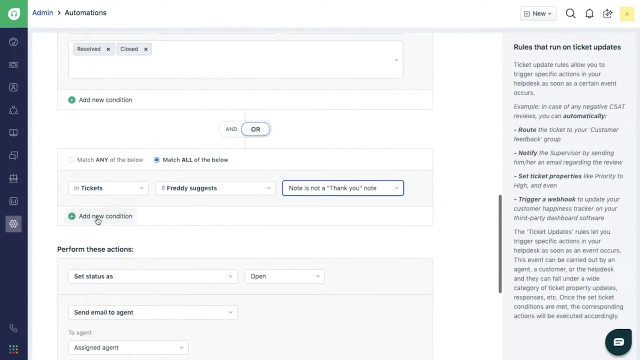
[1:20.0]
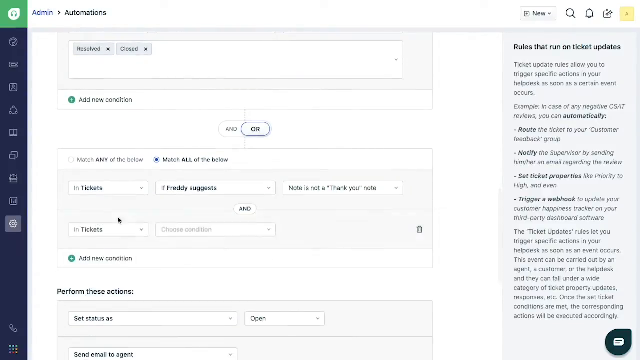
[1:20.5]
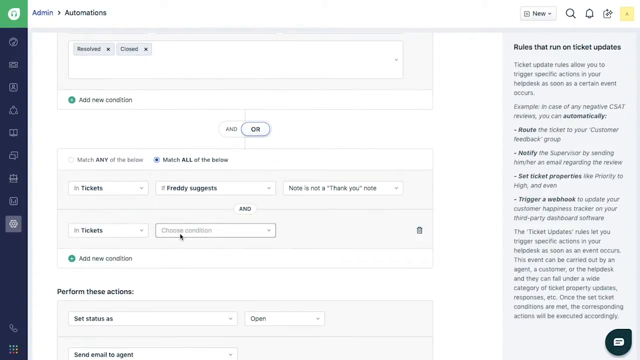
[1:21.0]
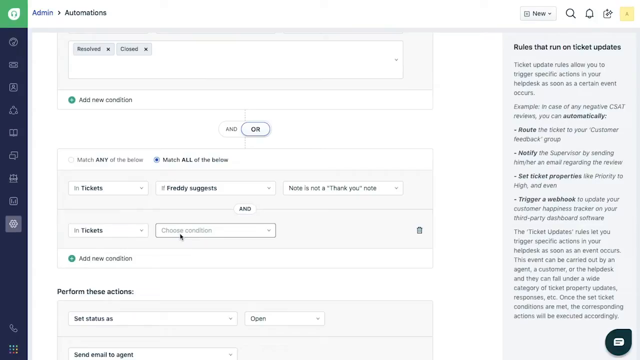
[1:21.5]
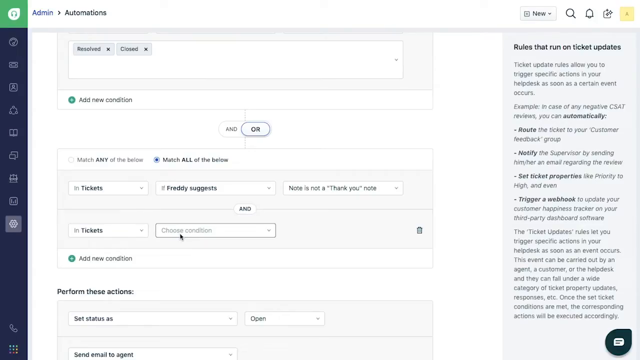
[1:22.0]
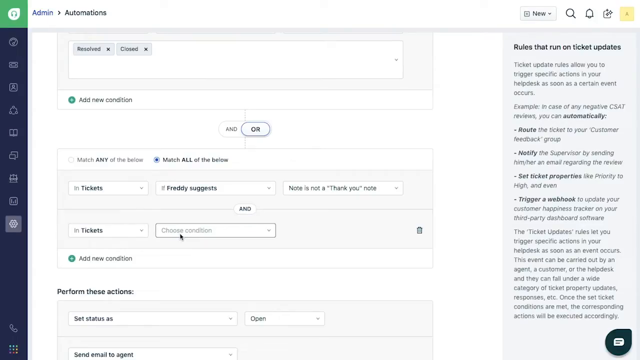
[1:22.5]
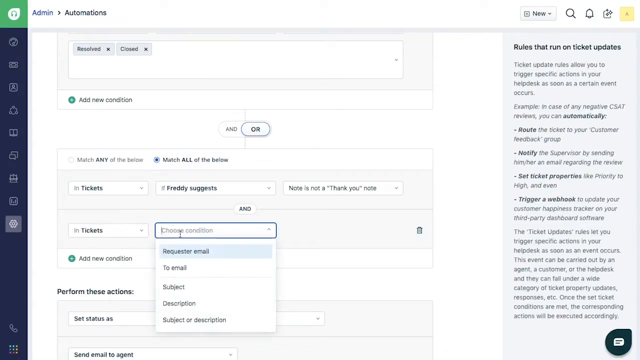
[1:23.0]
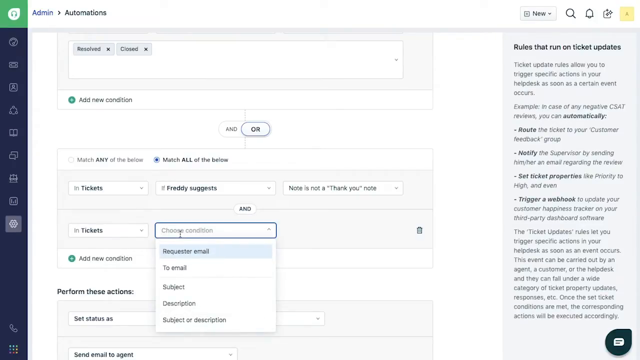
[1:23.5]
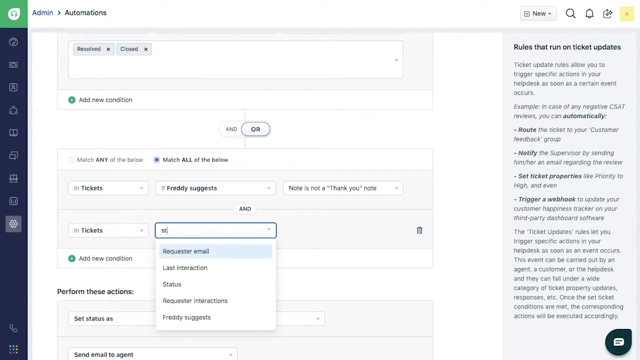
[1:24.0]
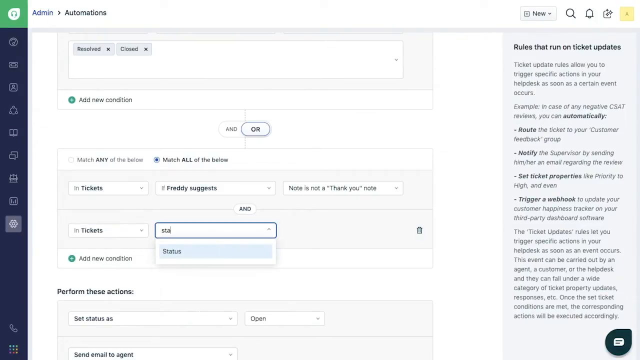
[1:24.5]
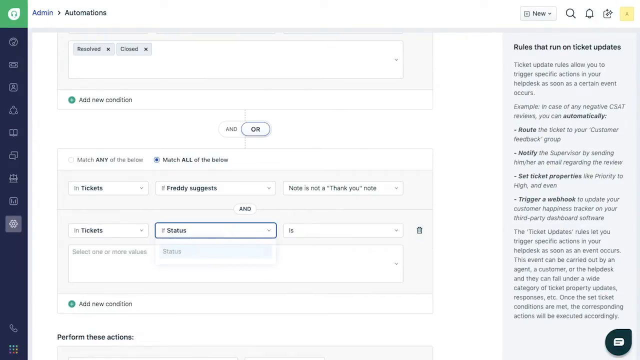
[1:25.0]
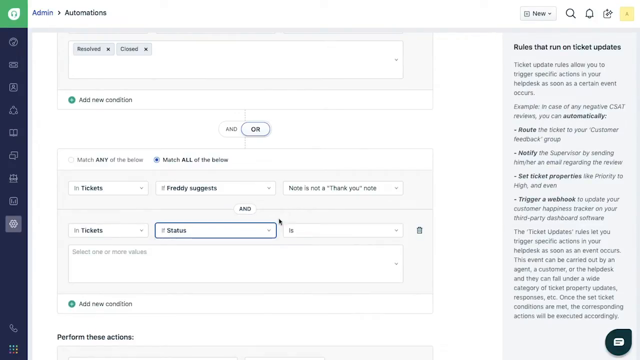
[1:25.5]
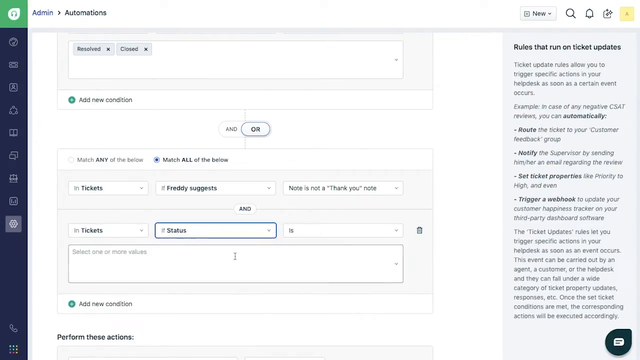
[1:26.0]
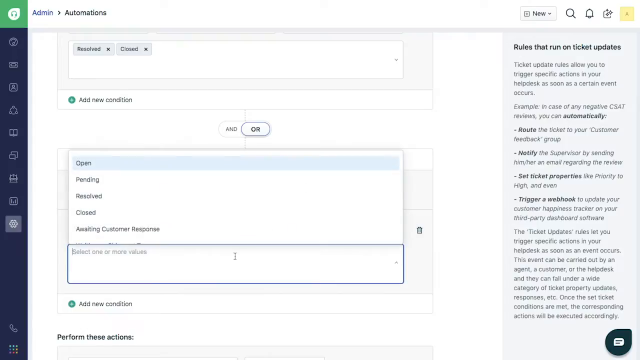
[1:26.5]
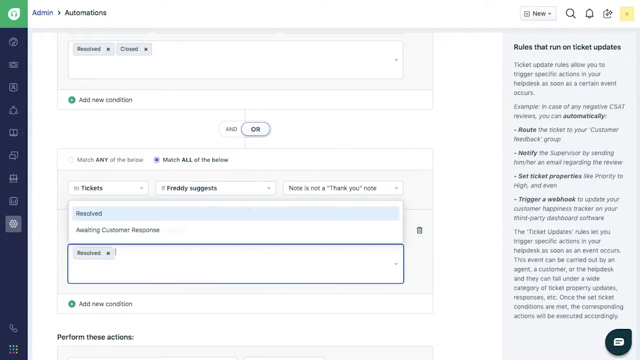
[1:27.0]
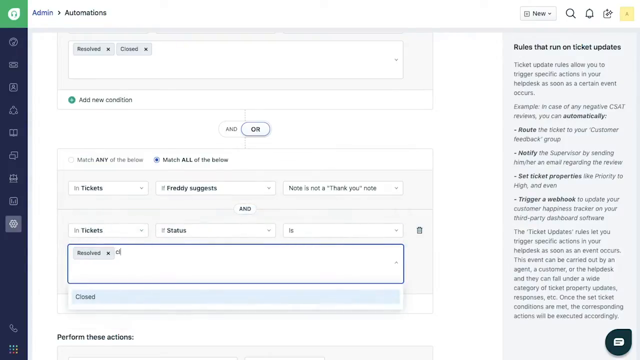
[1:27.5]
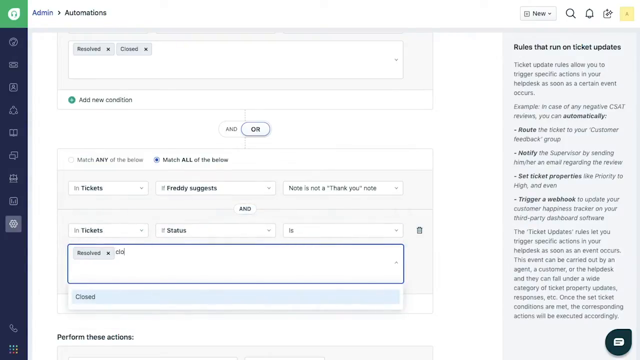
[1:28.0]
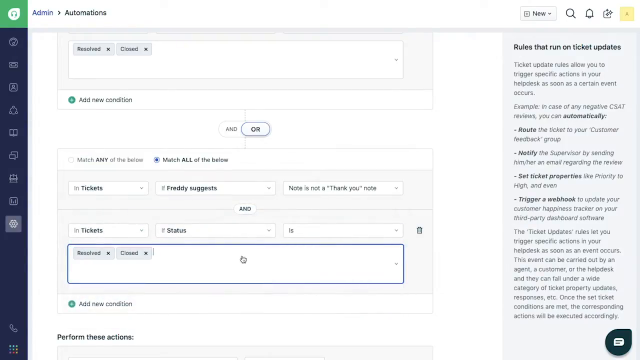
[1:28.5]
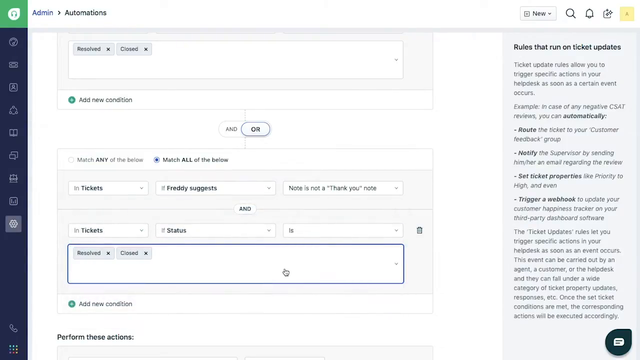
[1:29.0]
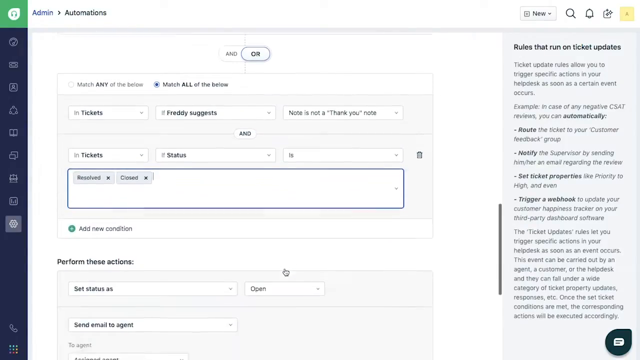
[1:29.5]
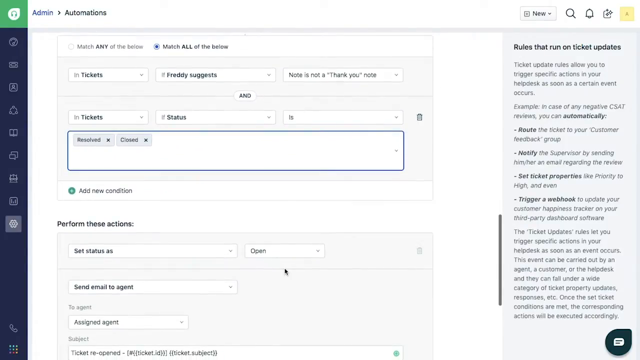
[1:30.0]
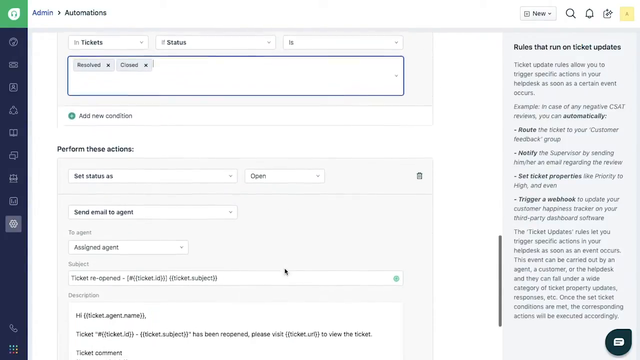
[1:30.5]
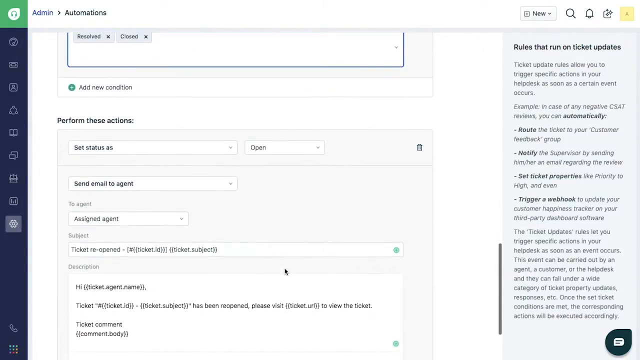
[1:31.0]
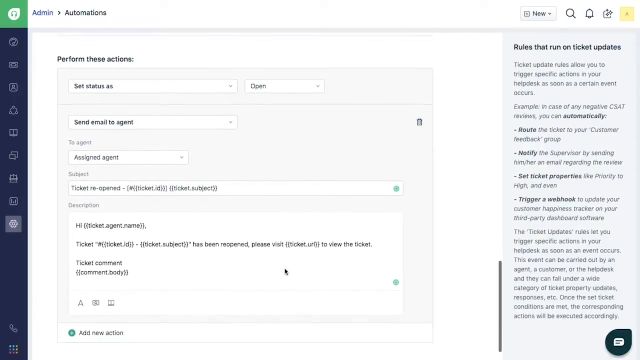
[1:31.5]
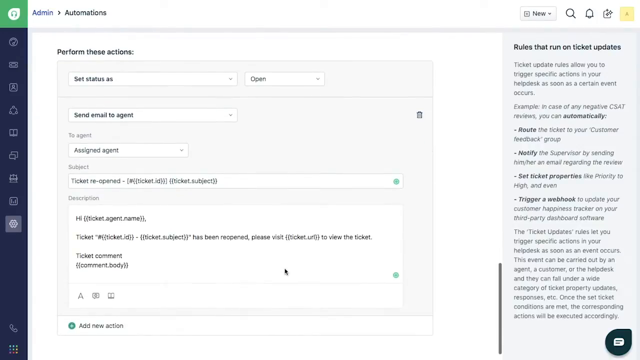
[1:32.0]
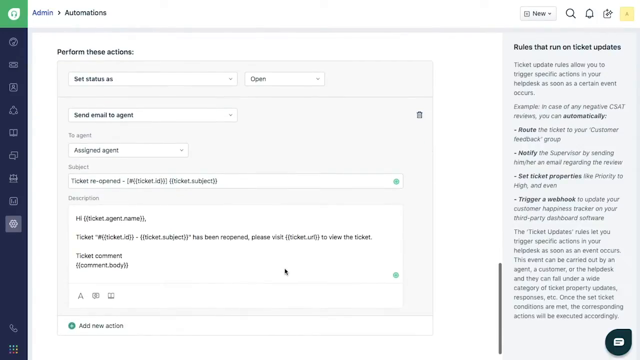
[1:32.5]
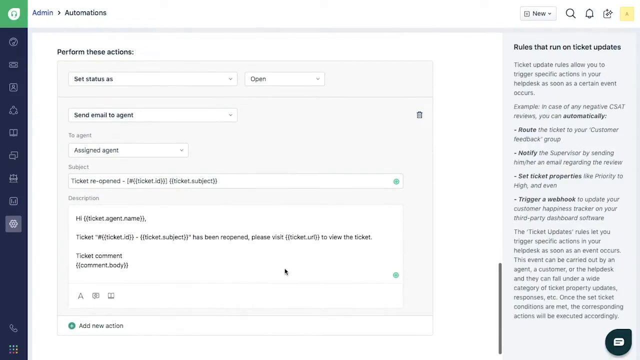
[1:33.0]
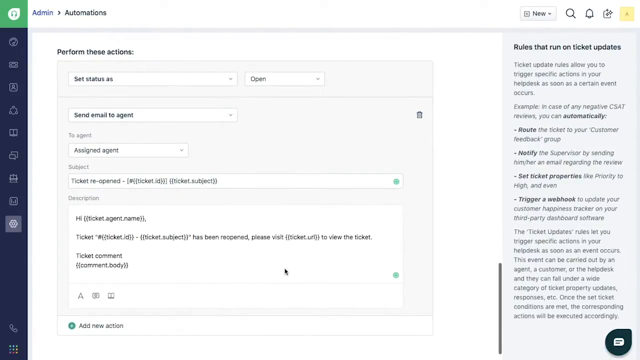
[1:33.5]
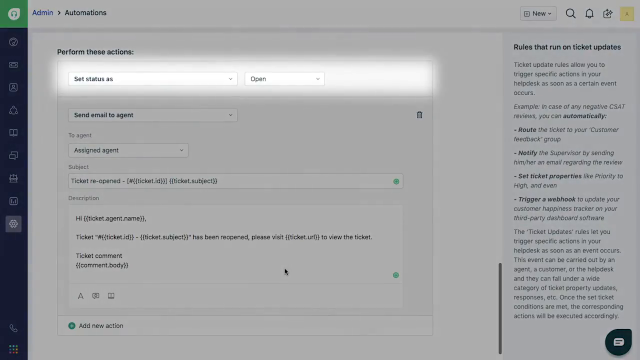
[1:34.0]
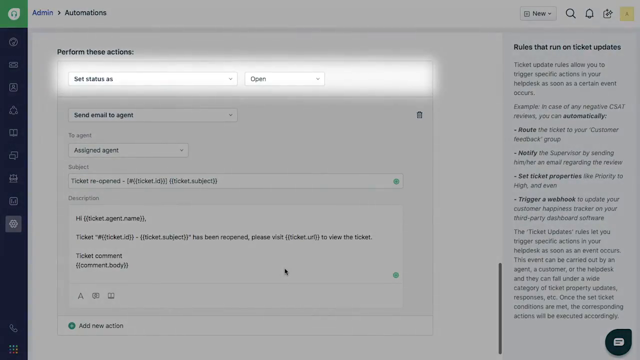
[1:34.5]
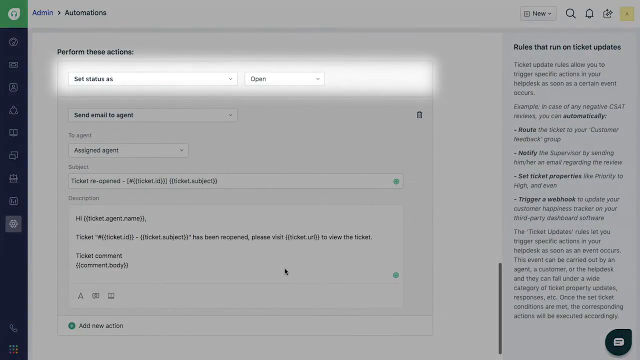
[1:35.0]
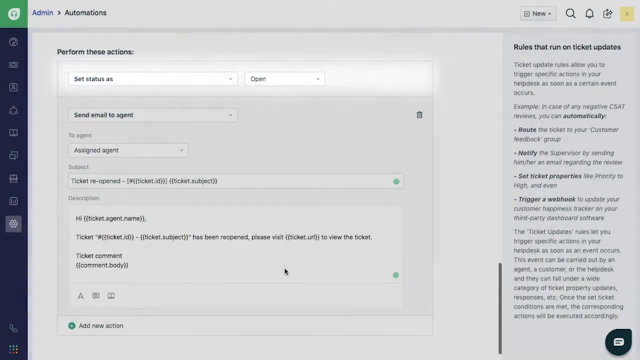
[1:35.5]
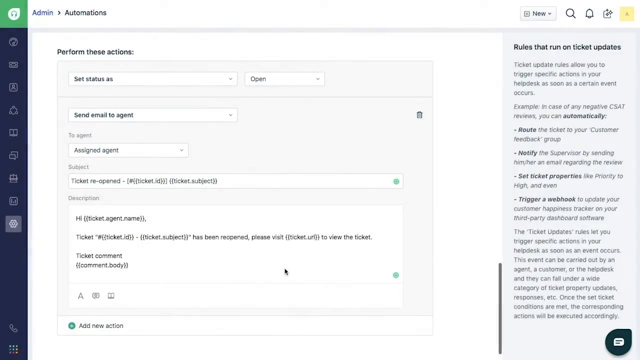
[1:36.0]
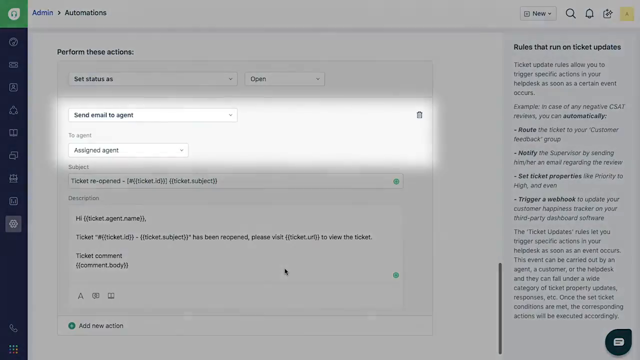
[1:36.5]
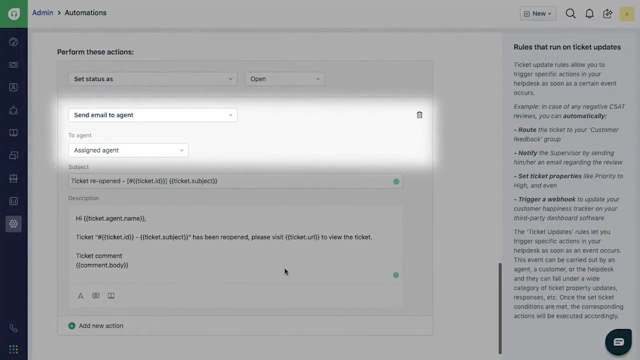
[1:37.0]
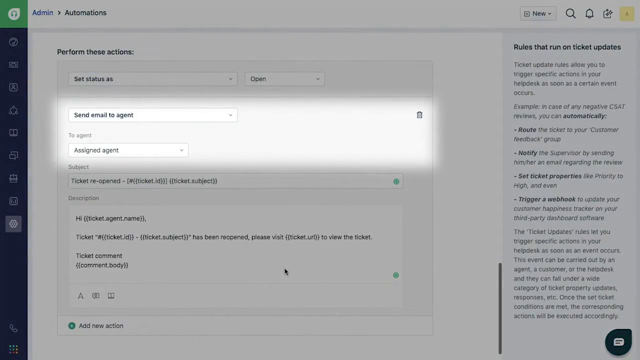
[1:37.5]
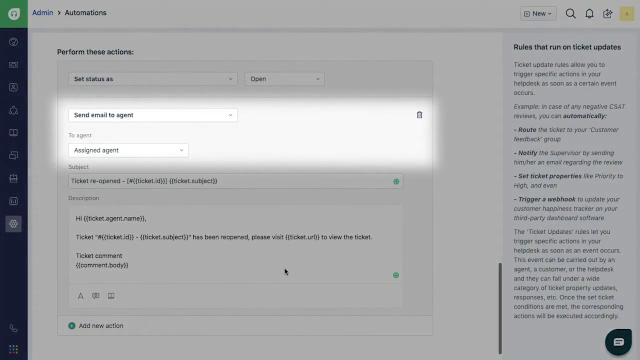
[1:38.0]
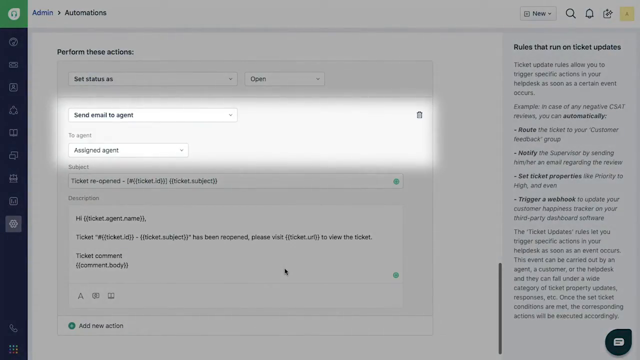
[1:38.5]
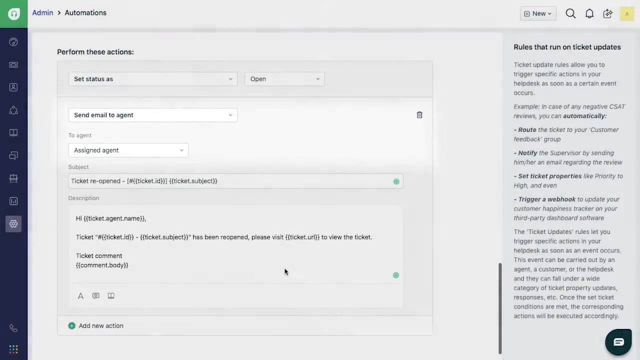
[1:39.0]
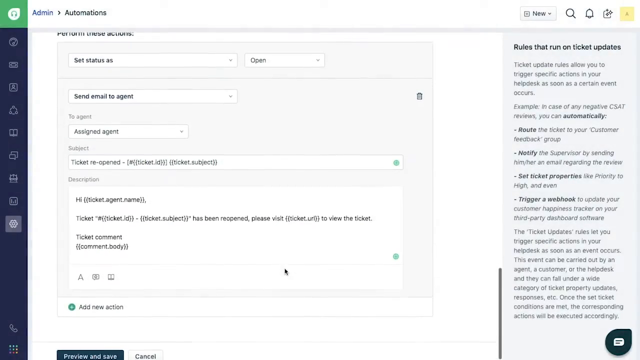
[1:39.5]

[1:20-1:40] The screen recording continues through the menu settings of a ticketing application. In the current section a rule is set up: the top row has a drop-down menu reading "in tickets," a second drop-down reading "at Freddy suggests," and a third reading "note is not a thank you note." The user adds another rule whose first drop-down reads "in tickets," types in status, adds another drop-down, and then adds two different notes in the description that appears underneath. Scrolling further, the next section reads "perform these actions," with the top drop-down reading "set status as" and the second reading "open." Further down, the text reads "send email to agent," "assign agent," and "ticket reopened," followed by a description with a generic template.